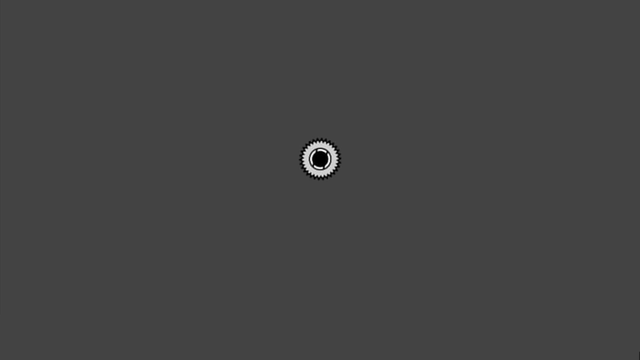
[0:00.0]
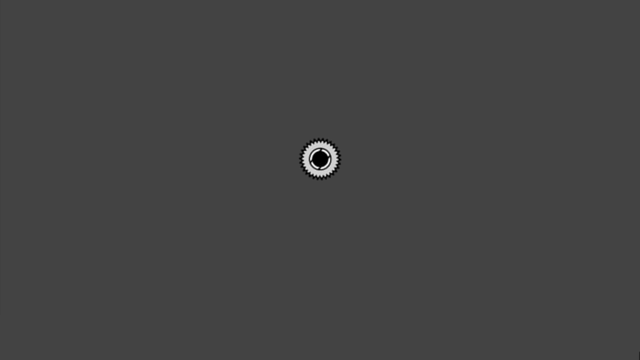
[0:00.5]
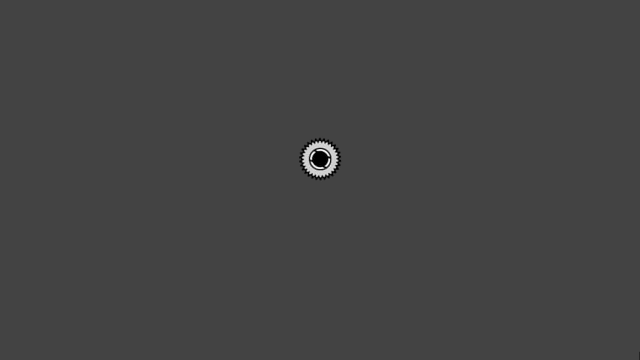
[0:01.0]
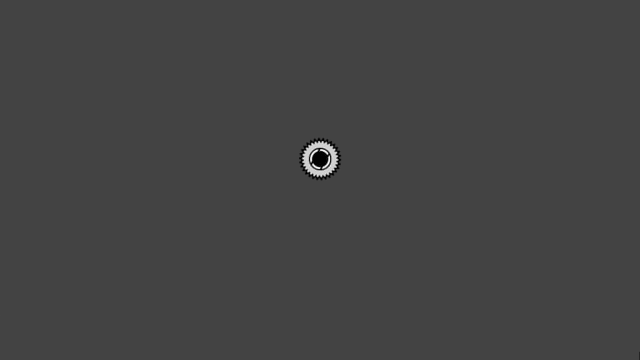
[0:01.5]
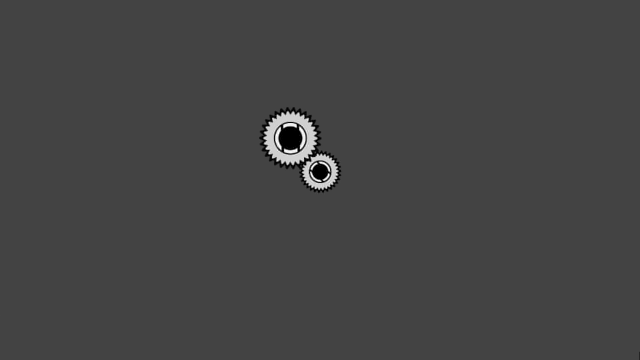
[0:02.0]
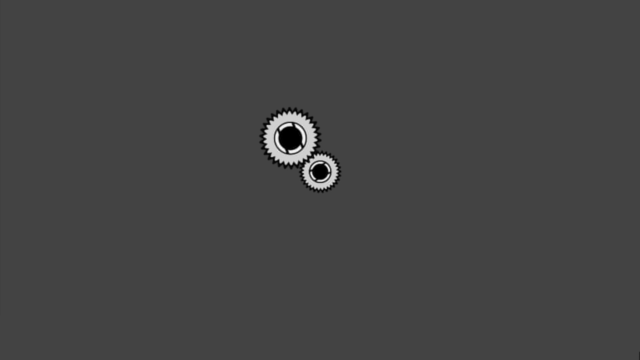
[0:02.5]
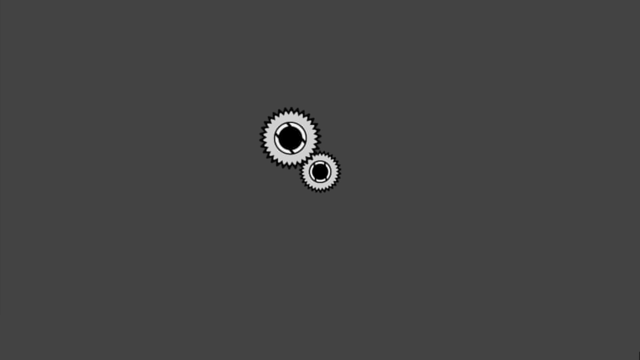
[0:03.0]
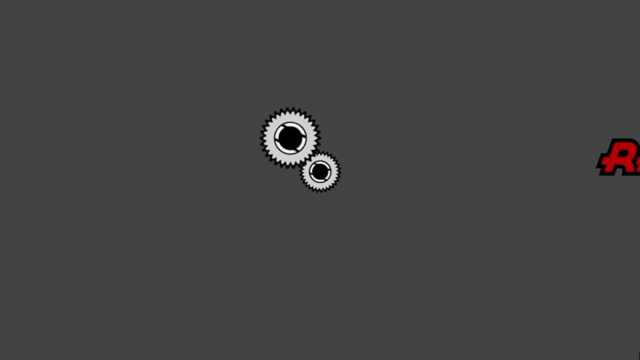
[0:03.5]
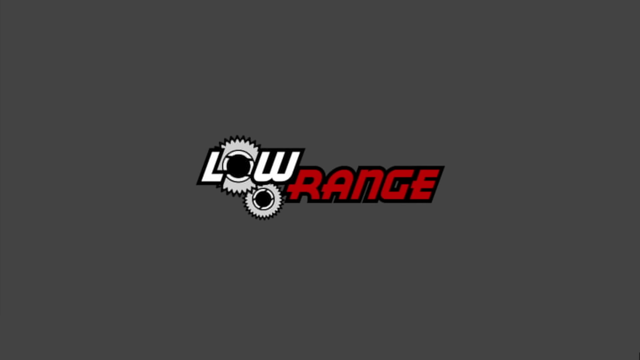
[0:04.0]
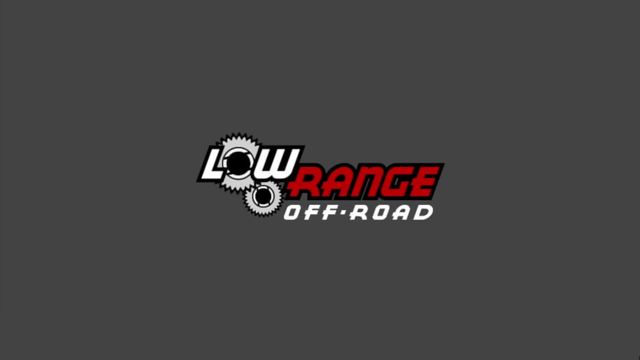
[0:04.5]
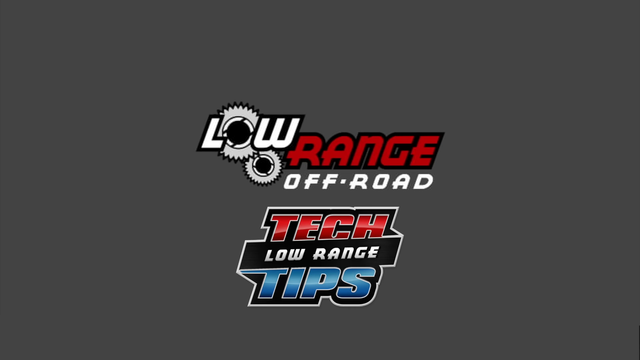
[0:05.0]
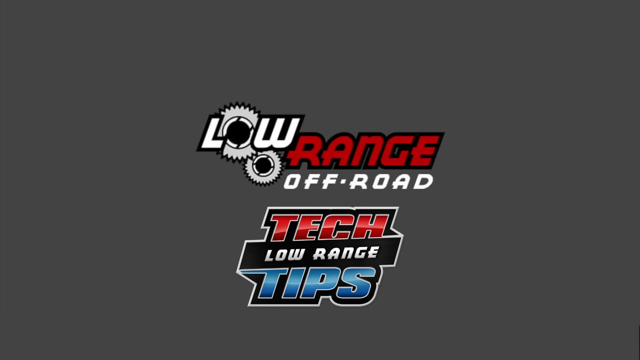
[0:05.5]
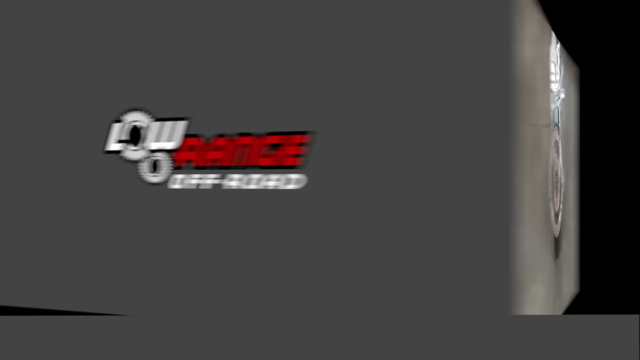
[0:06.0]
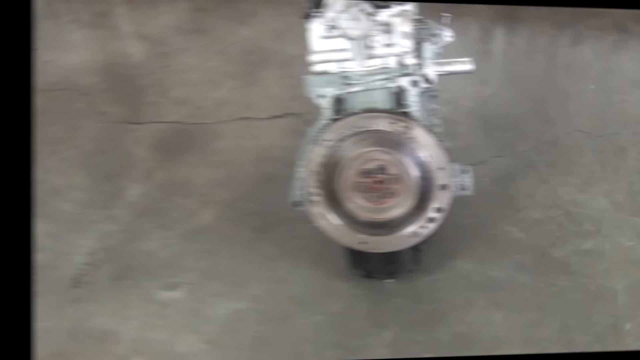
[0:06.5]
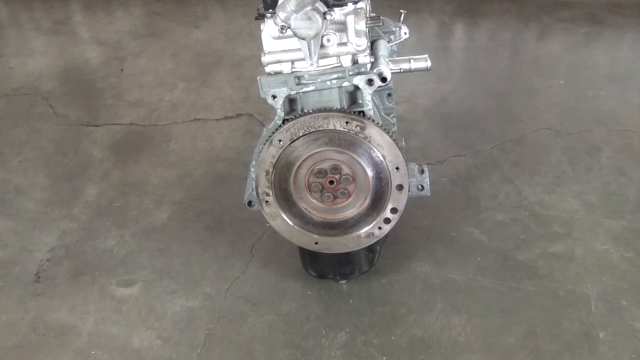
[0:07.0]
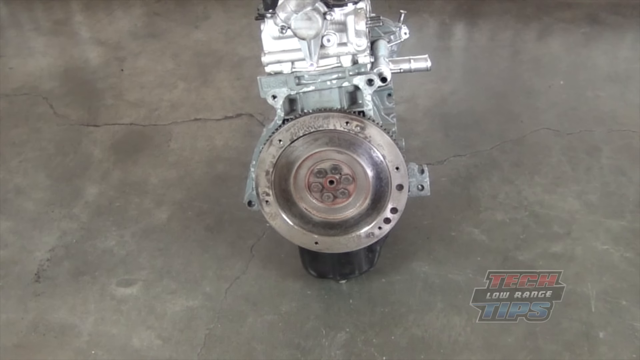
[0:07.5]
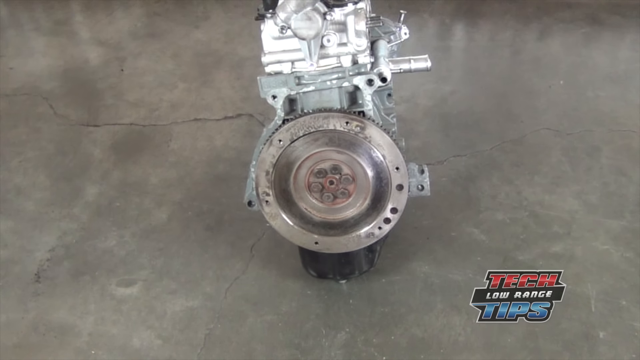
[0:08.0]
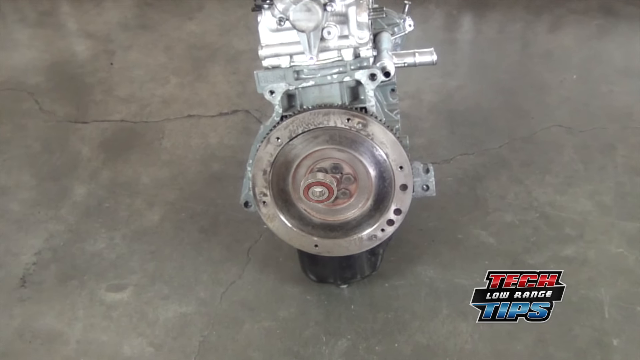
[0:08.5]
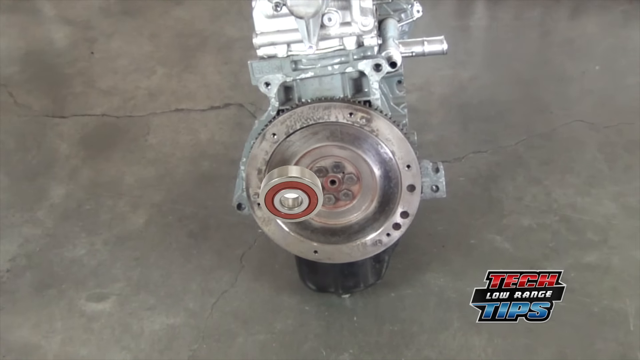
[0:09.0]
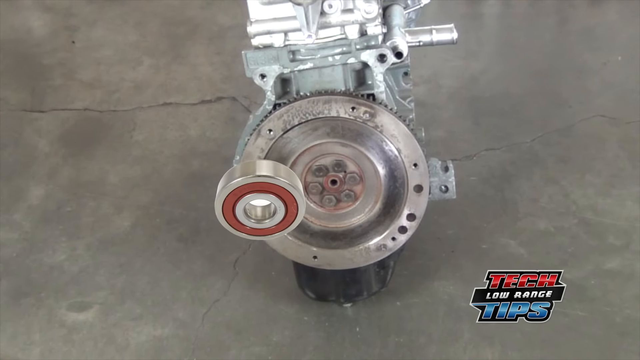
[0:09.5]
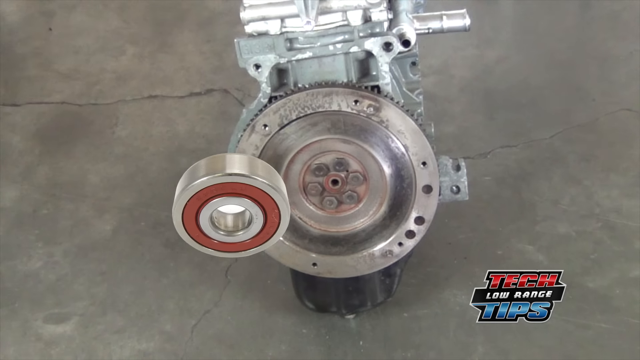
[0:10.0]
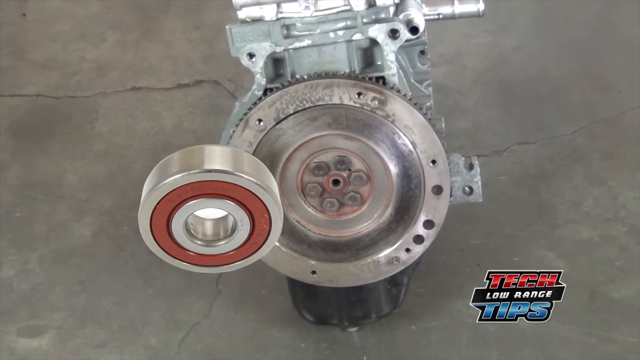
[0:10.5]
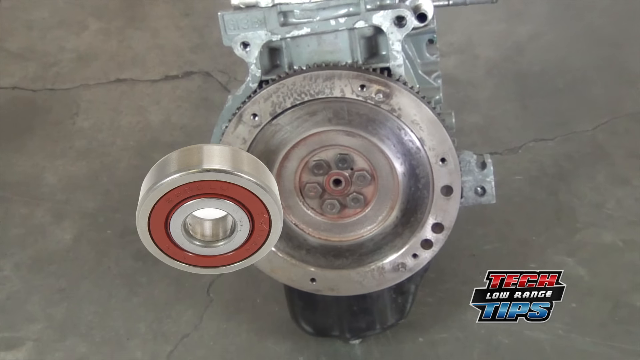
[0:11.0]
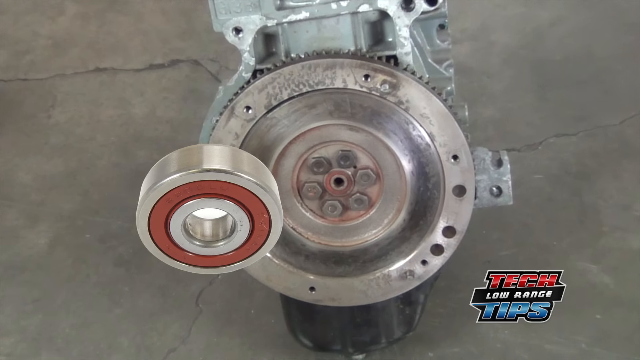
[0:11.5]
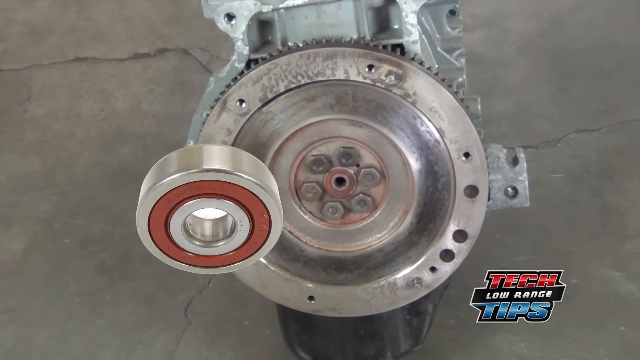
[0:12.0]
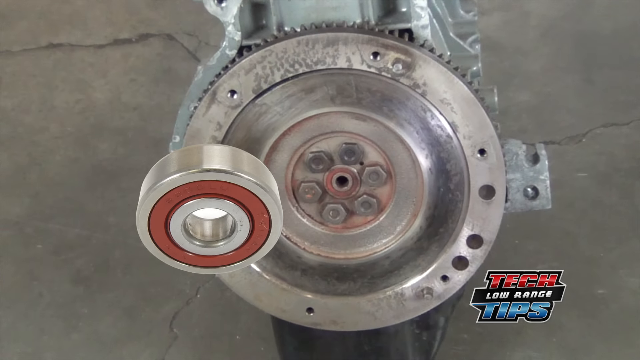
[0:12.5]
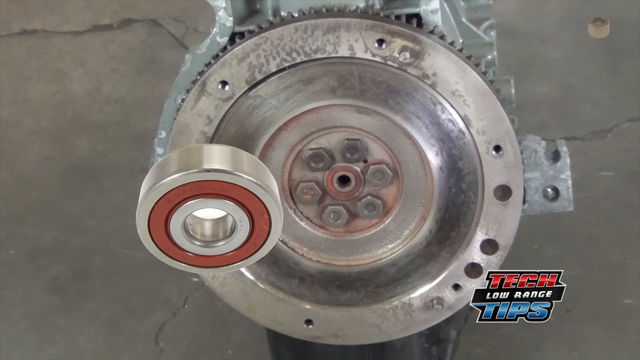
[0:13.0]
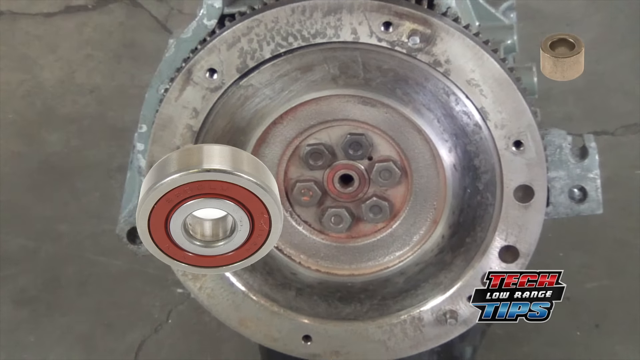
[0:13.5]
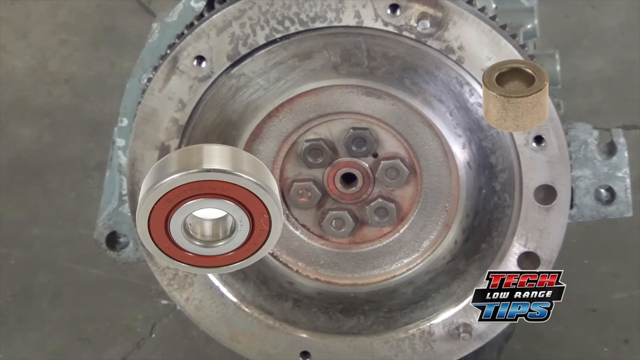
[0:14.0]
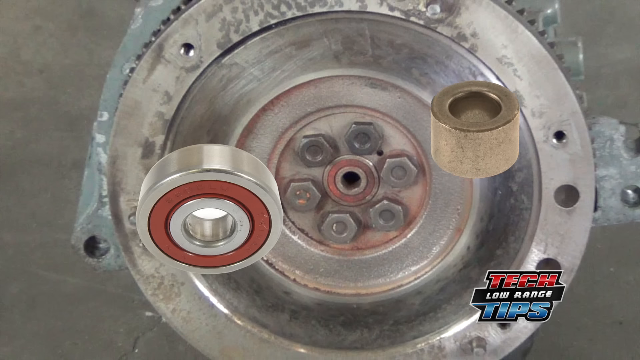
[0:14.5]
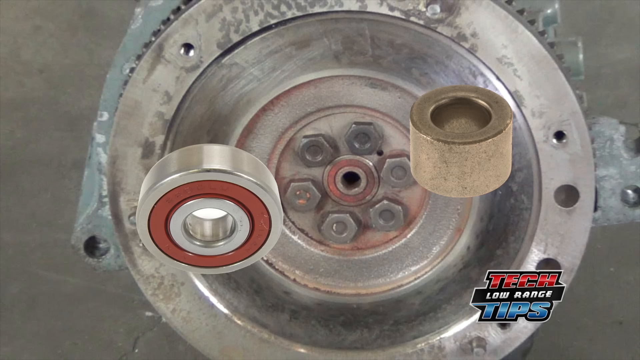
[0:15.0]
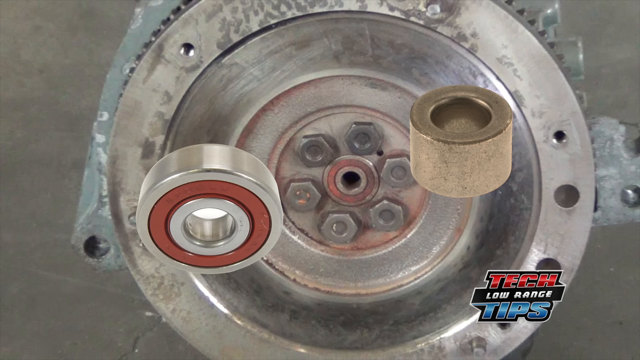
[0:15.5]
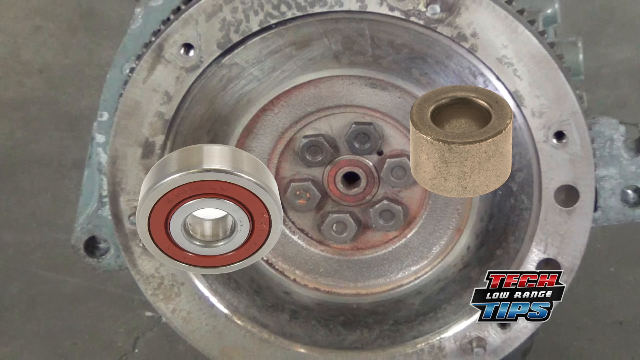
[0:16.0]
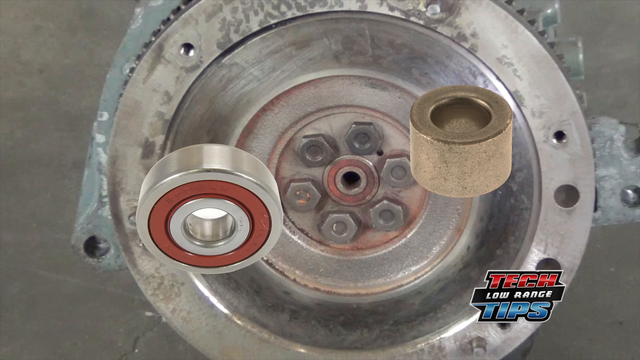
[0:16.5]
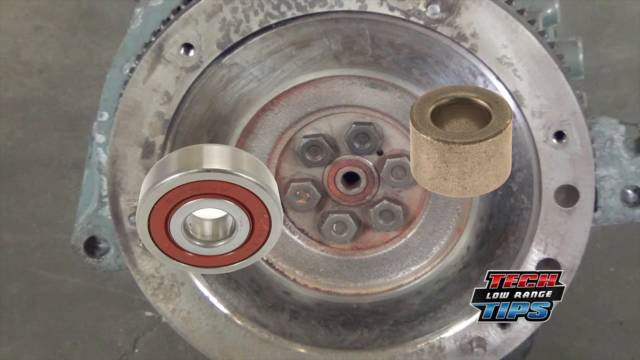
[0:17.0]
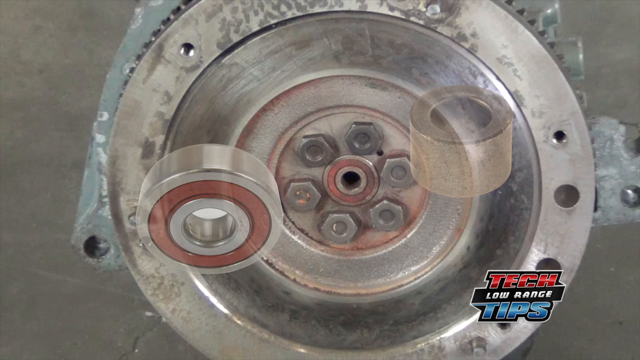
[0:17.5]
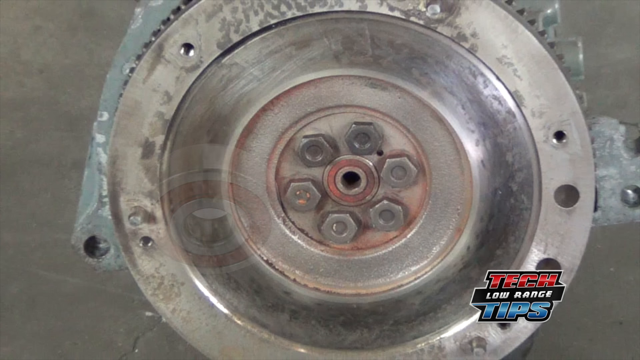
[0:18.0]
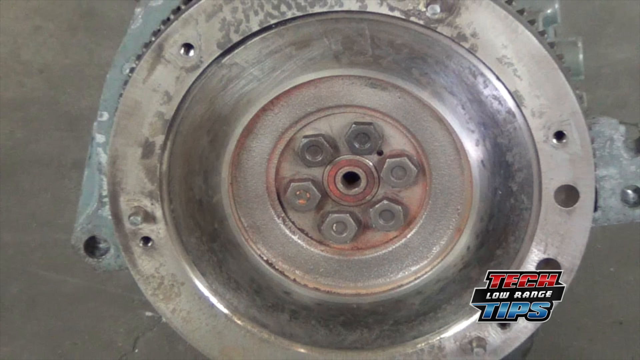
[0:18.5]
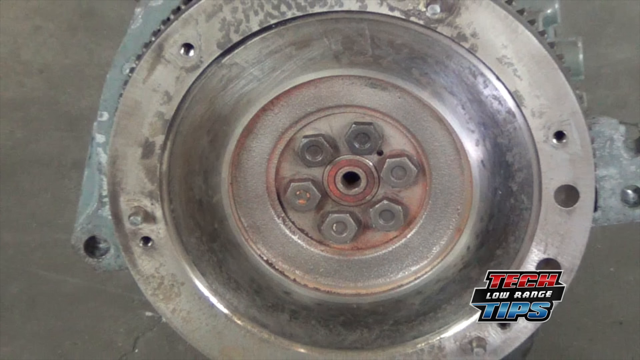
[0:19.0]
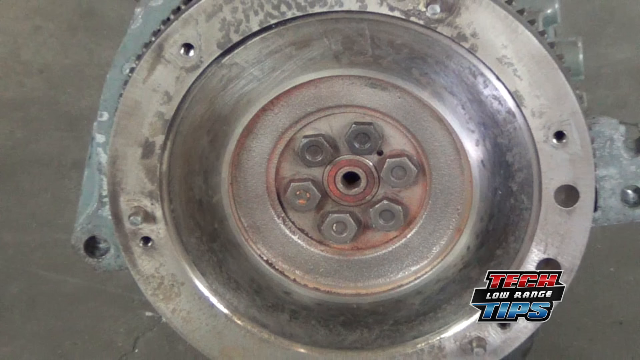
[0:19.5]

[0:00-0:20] The video opens on a little gadget that looks like a circle, a wrench or a screw, and the text reads "low range off-road tech, low range tips." A little silver, circular mechanical part of uncertain purpose appears, with a little nut inside it. The camera zooms in, revealing another little nut as different parts of the circular object are shown.